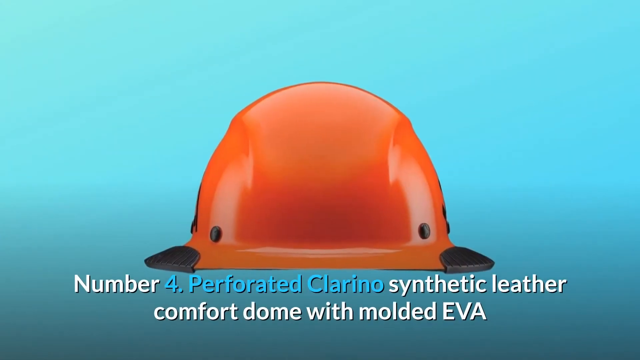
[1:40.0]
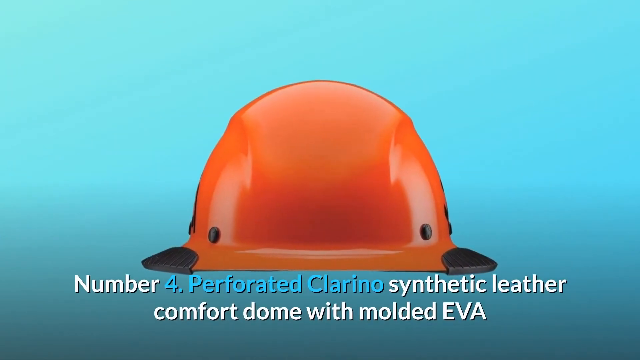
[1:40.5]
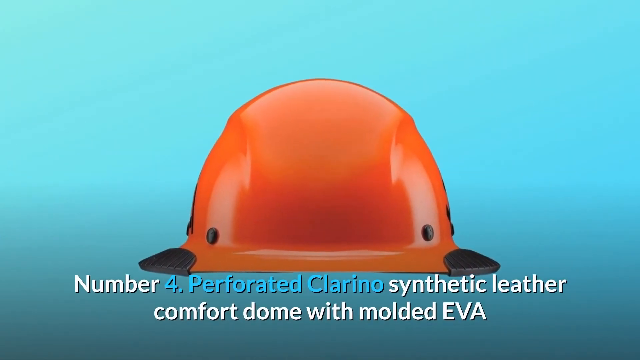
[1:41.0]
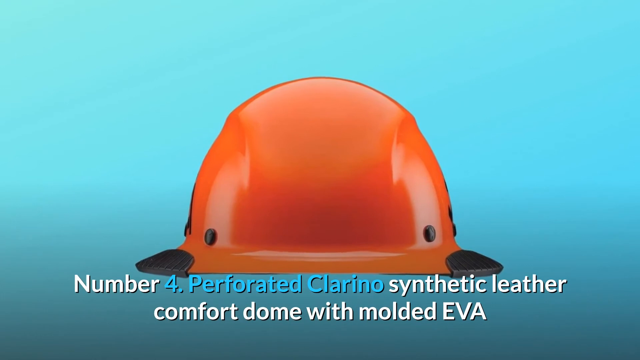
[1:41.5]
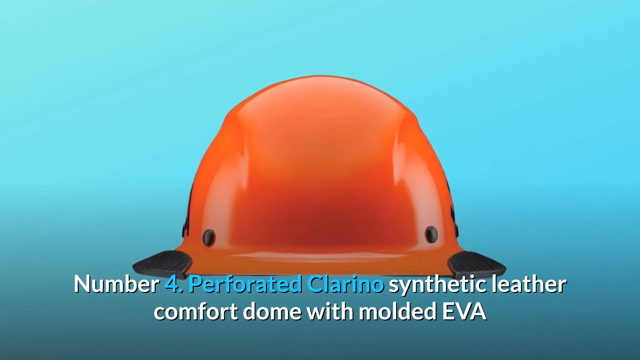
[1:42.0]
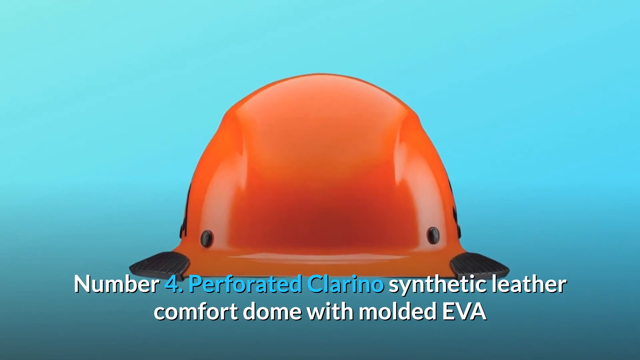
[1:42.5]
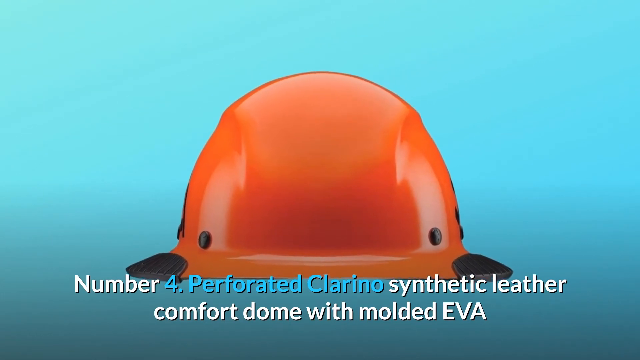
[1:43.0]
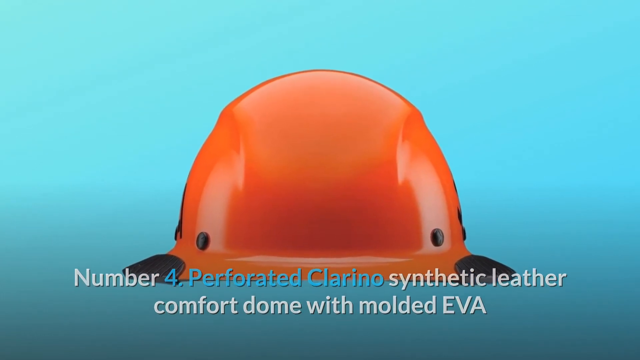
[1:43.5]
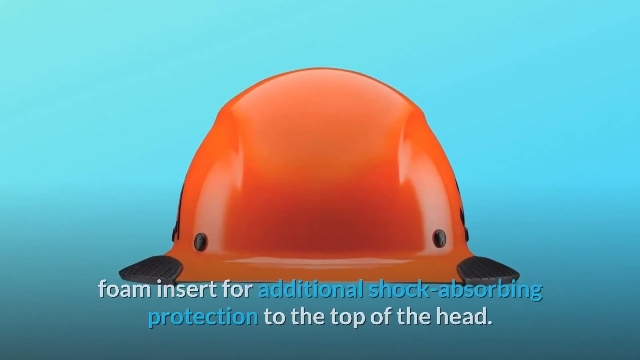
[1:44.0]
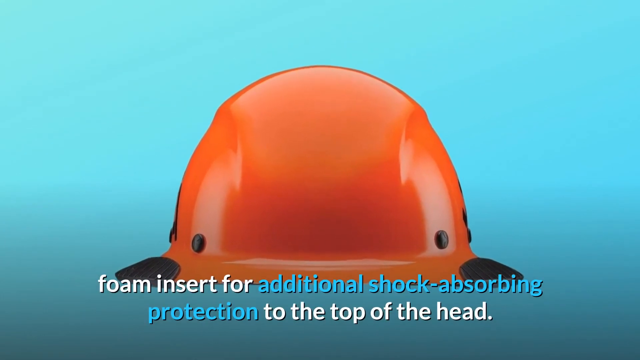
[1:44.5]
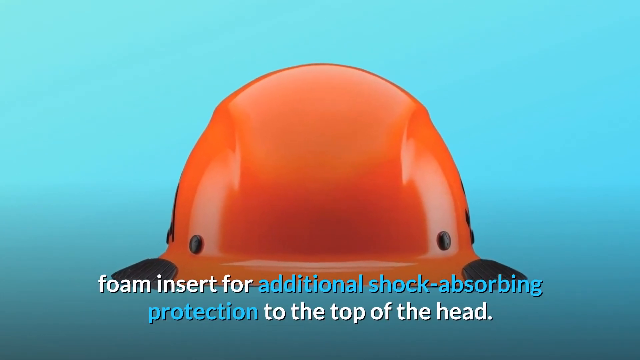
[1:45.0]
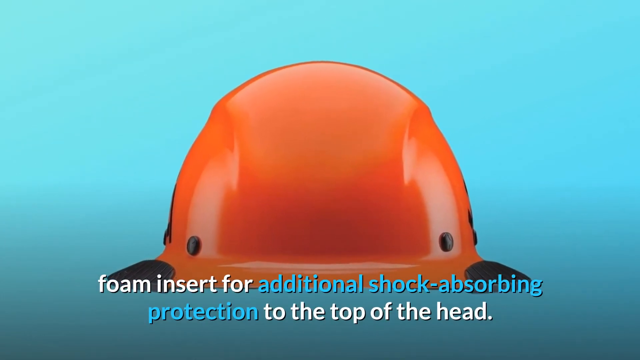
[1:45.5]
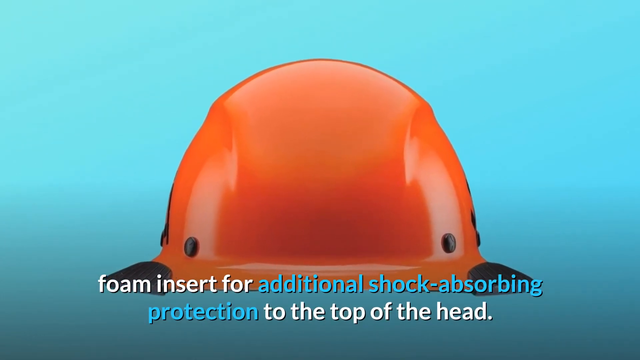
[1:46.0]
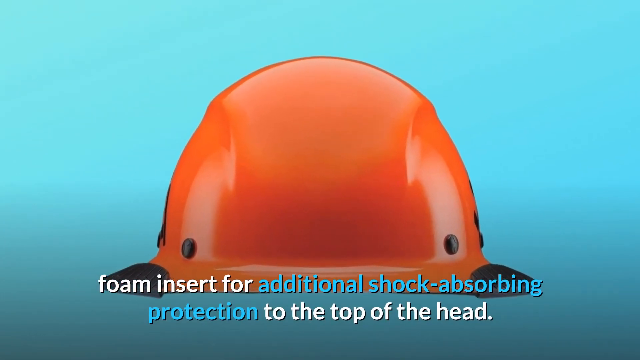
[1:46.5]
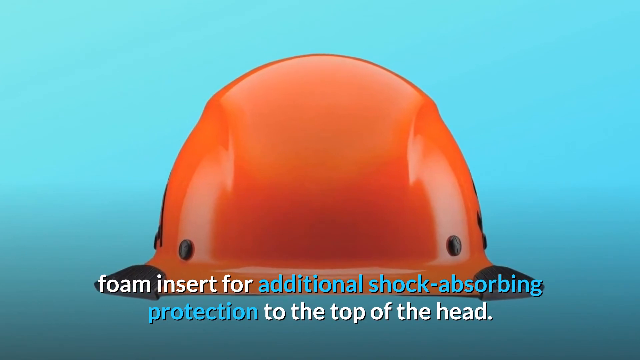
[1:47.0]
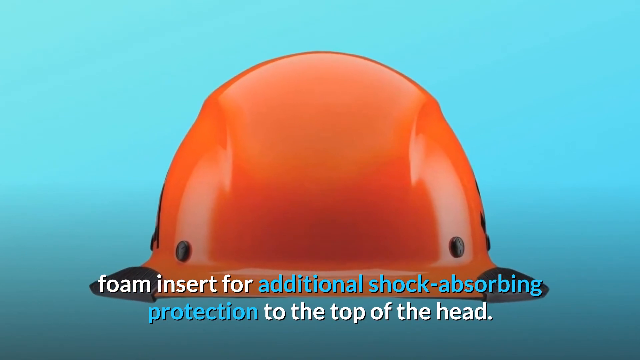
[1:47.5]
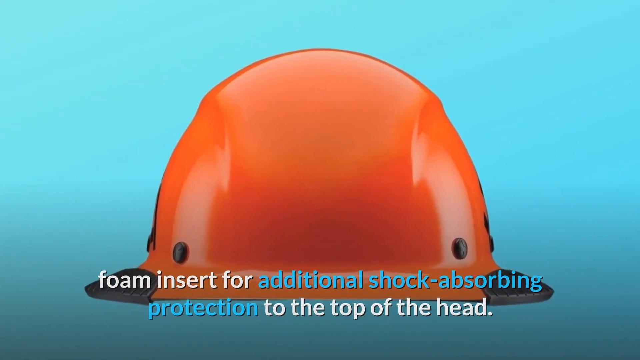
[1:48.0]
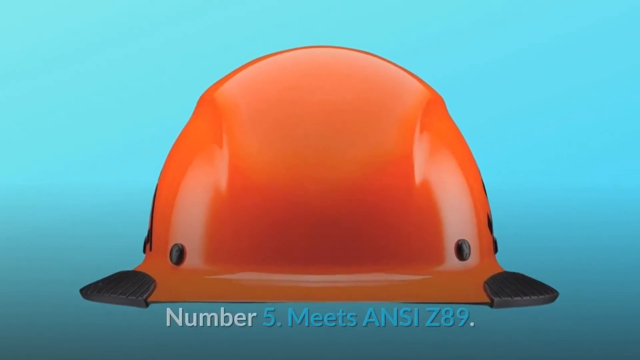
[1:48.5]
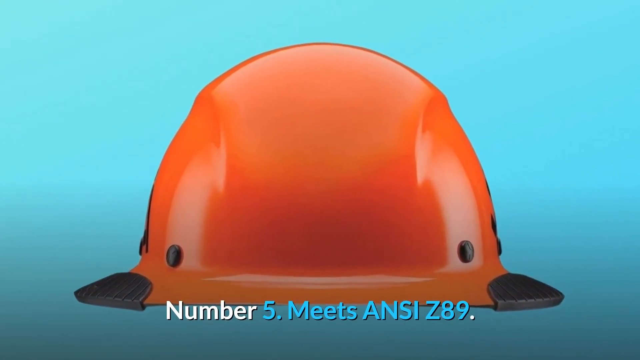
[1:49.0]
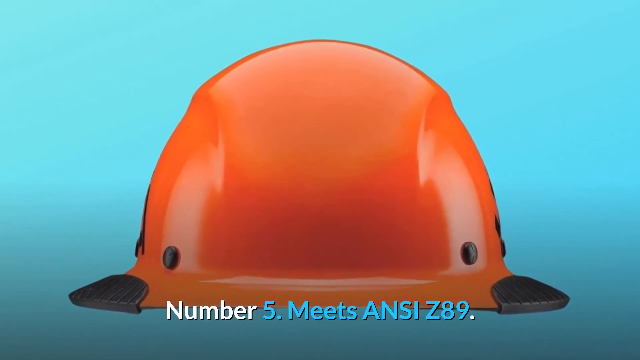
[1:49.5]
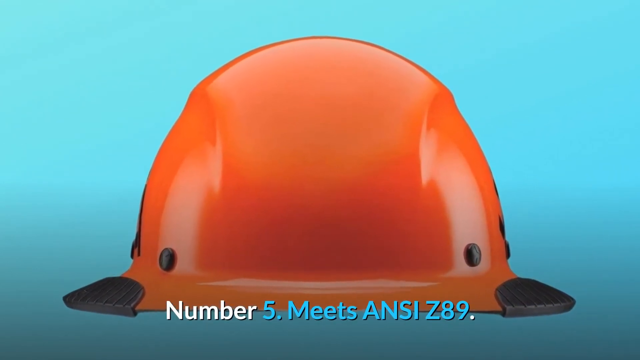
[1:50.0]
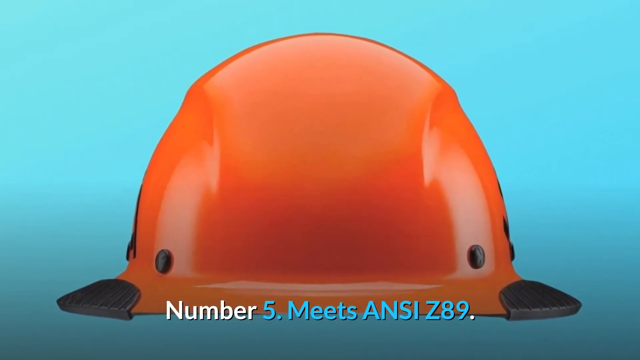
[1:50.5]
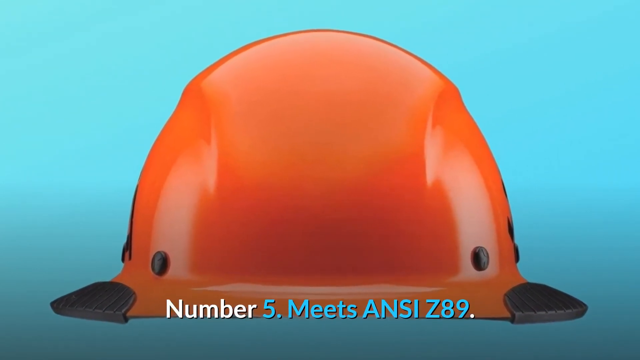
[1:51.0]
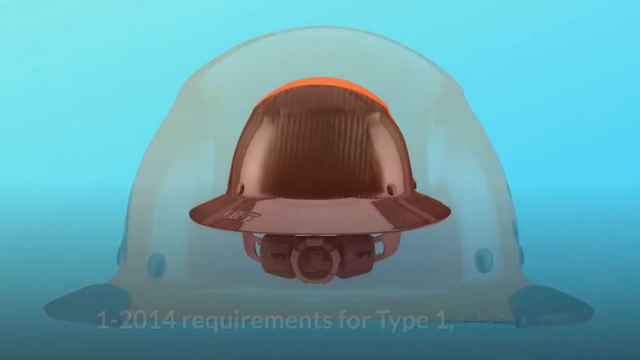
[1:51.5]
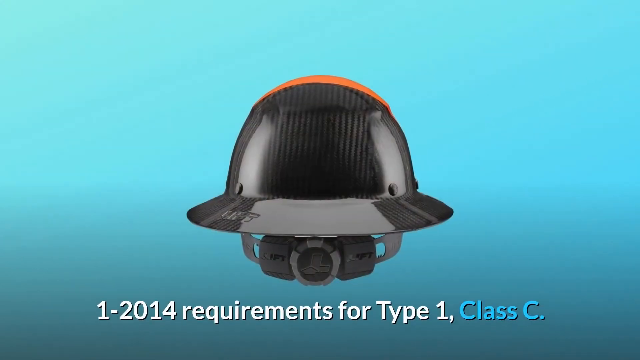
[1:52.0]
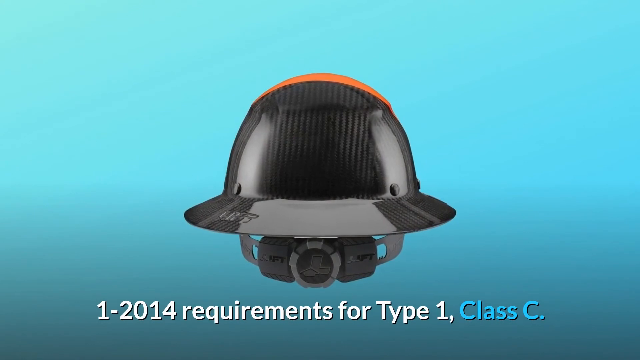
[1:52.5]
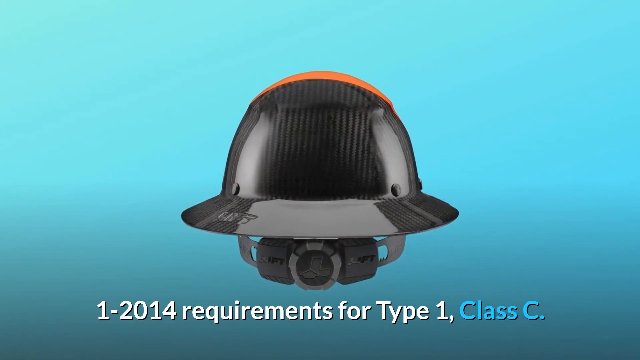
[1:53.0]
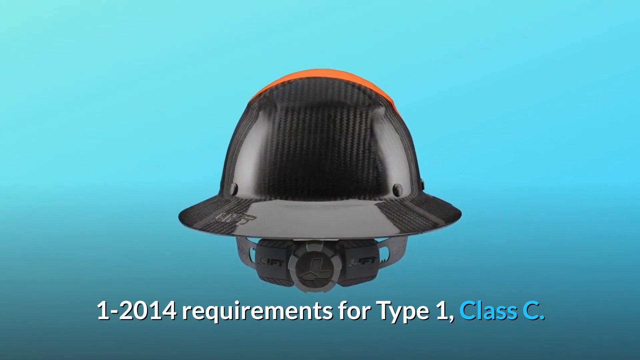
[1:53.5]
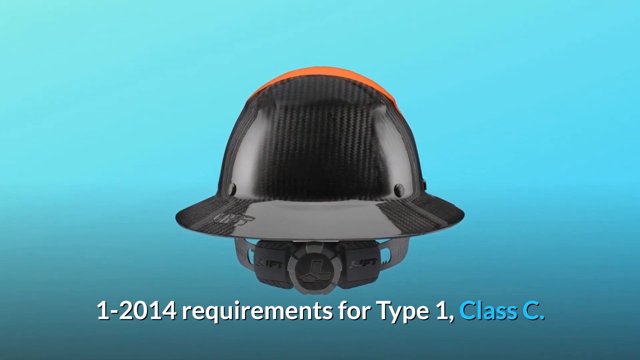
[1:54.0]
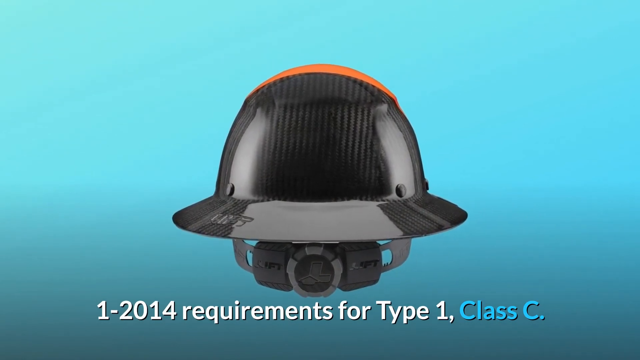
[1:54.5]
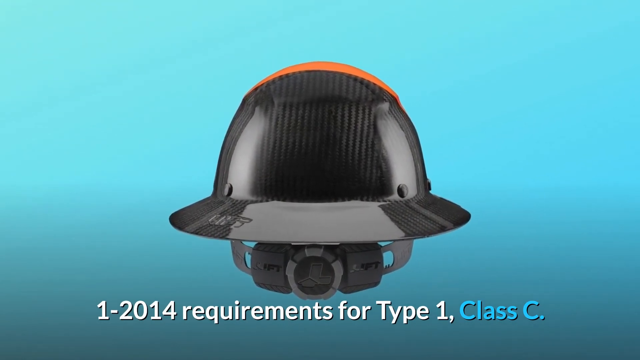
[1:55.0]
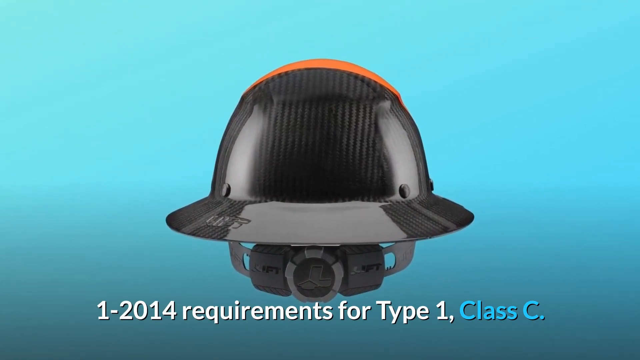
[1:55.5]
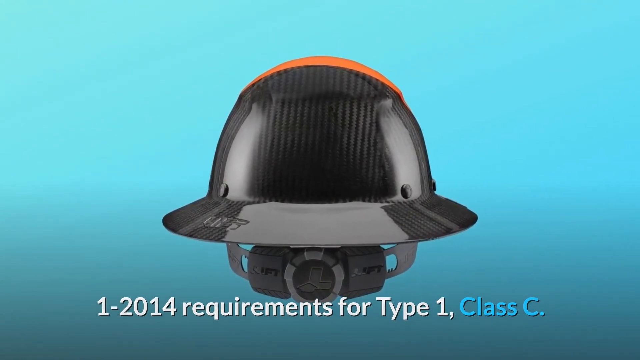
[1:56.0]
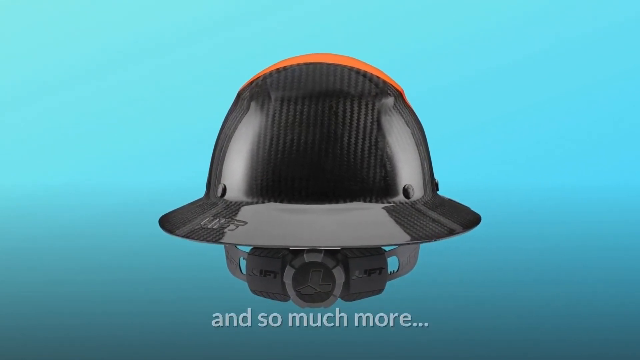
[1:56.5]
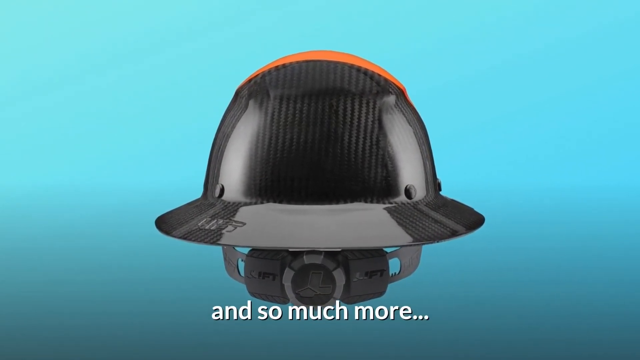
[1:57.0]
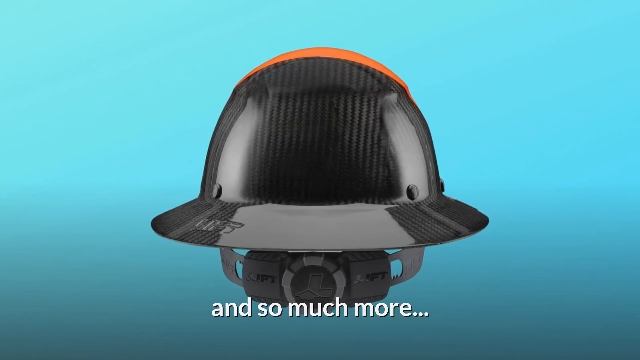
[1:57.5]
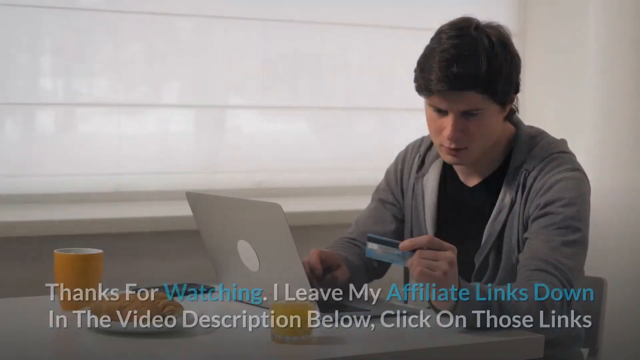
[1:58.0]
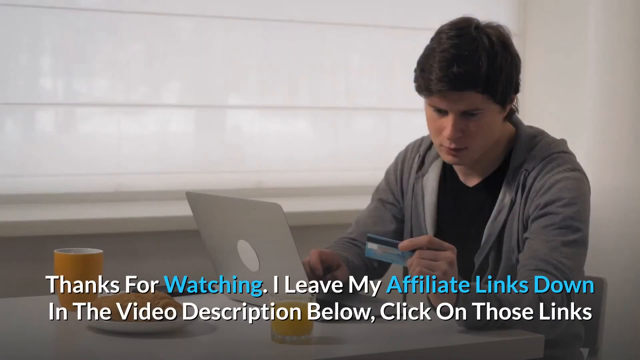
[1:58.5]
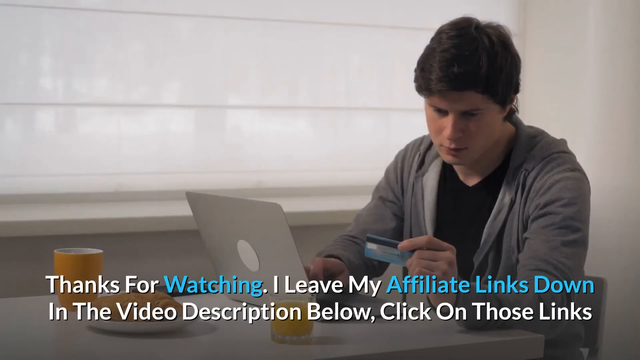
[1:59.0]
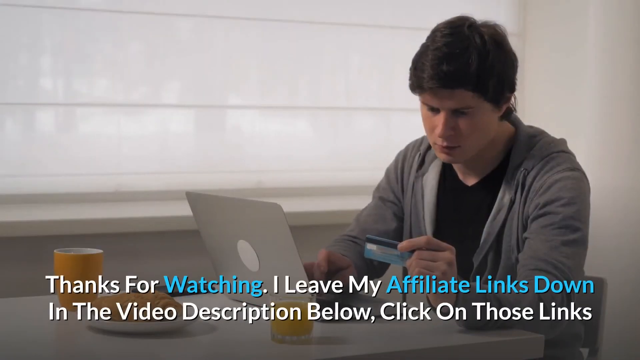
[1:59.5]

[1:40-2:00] Number 4 remains on screen while the video zooms in on the front of the hard cap. The new caption reads "foam insert for additional shock-absorbing protection to the top of the head," with "additional shock-absorbing protection" bolded in light blue. The fifth and final item on the list, number 5, states "meet ANSI Z89" while the video is still zooming in on the front of the hat. A new caption then states "1 2014 requirements for Type 1 Class C. And so much more." The last image of the hat is again the back view seen before. The carbon fiber material, the "lift" logo on the left side, and the dial on the back for making the hat tighter or looser are visible. There are two "lift" logos on either side of the dial as well as on top, and on top of the dial is an uppercase L with an arrow underneath it.